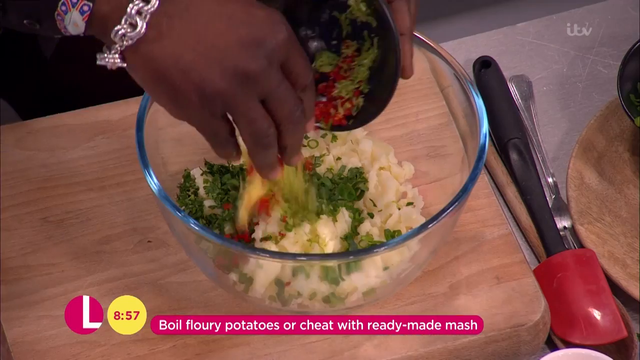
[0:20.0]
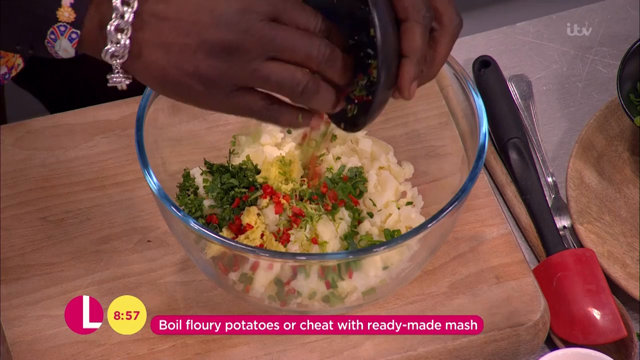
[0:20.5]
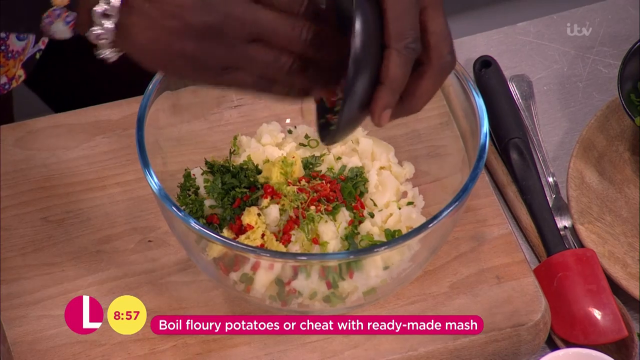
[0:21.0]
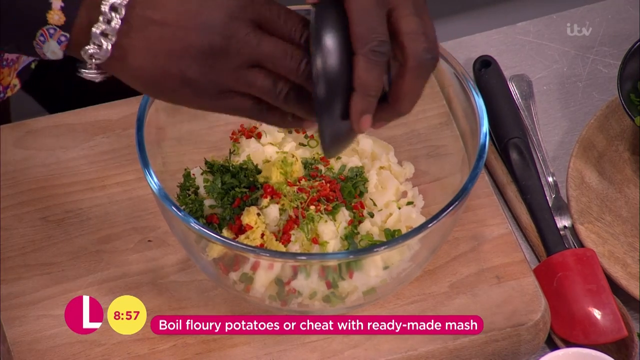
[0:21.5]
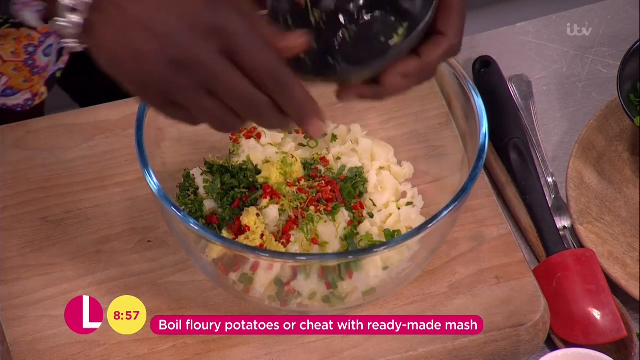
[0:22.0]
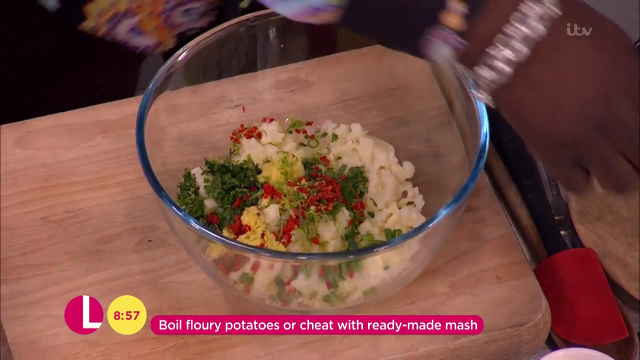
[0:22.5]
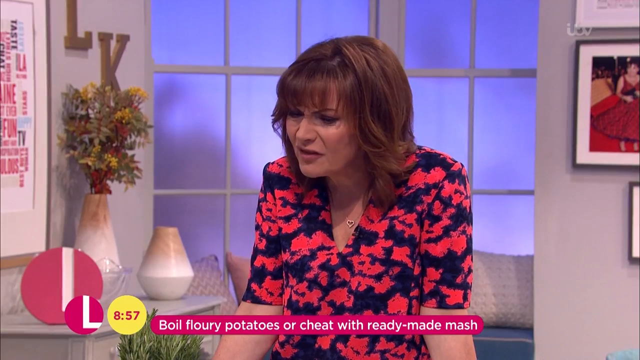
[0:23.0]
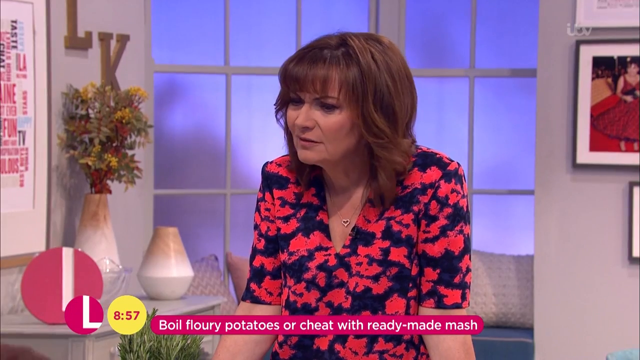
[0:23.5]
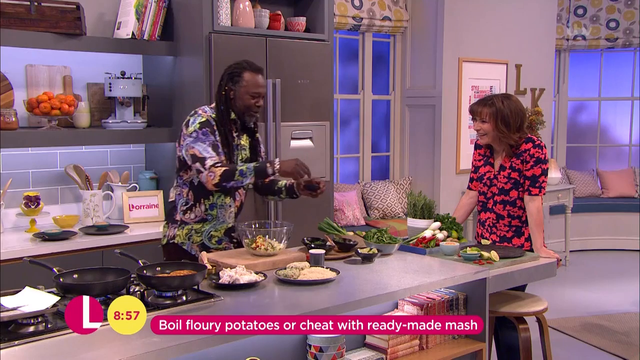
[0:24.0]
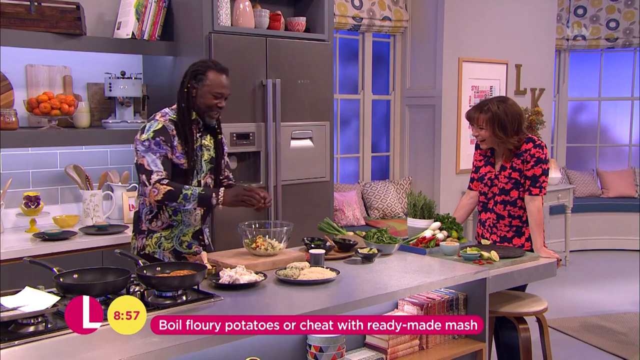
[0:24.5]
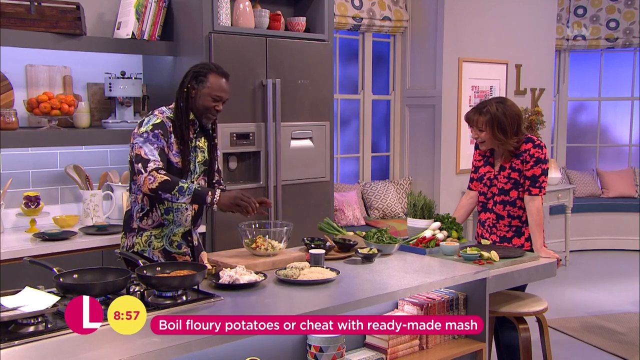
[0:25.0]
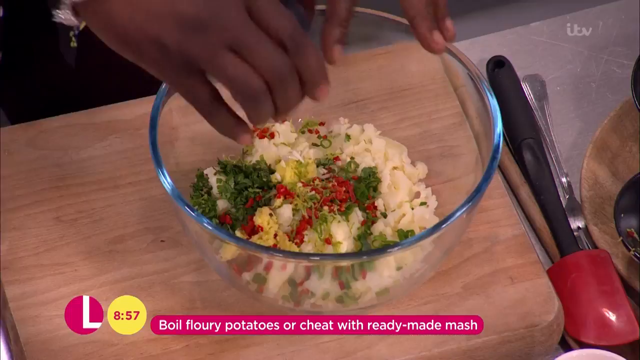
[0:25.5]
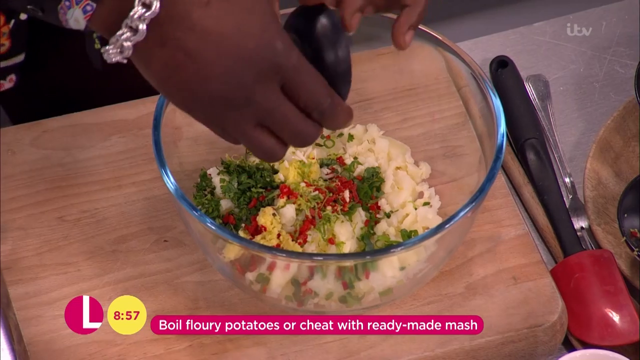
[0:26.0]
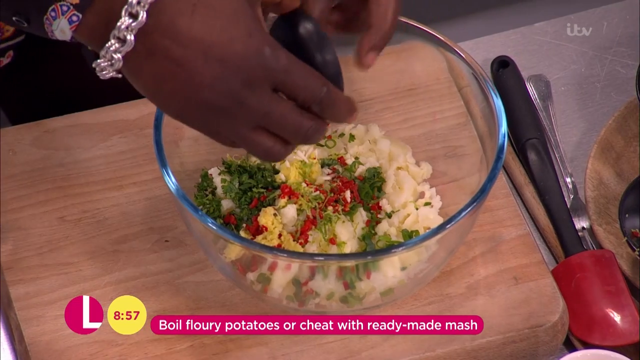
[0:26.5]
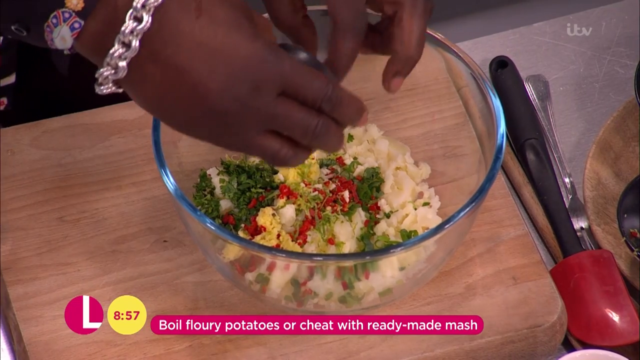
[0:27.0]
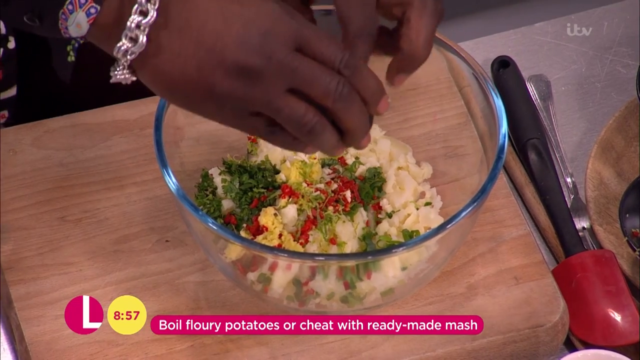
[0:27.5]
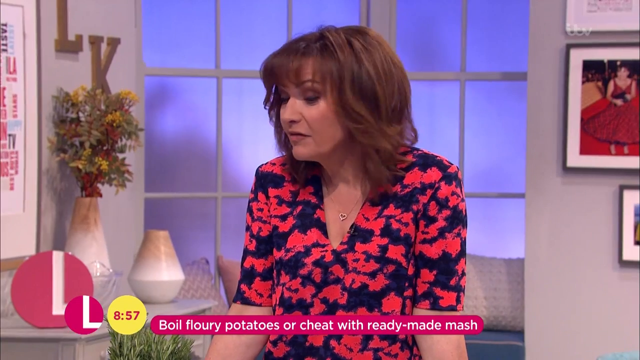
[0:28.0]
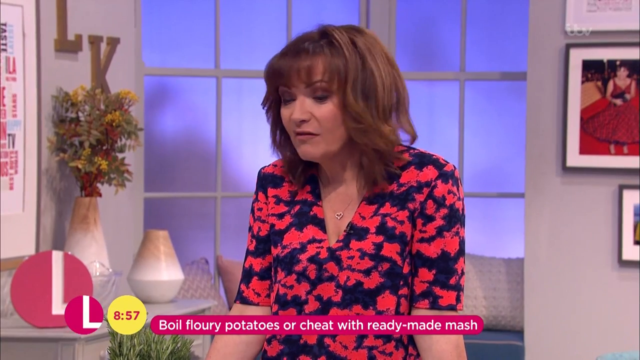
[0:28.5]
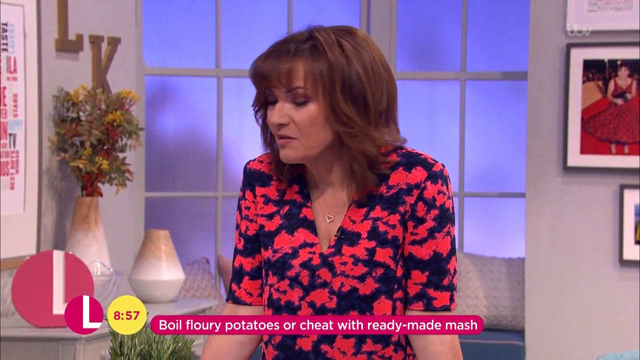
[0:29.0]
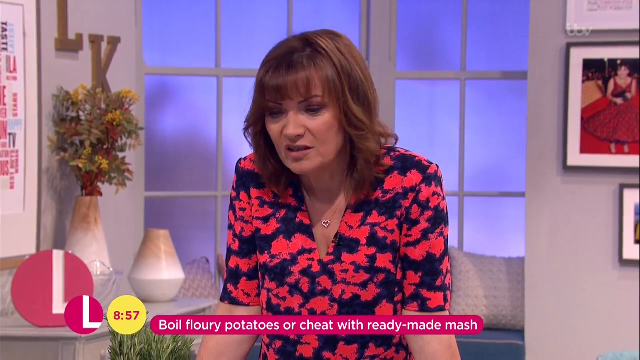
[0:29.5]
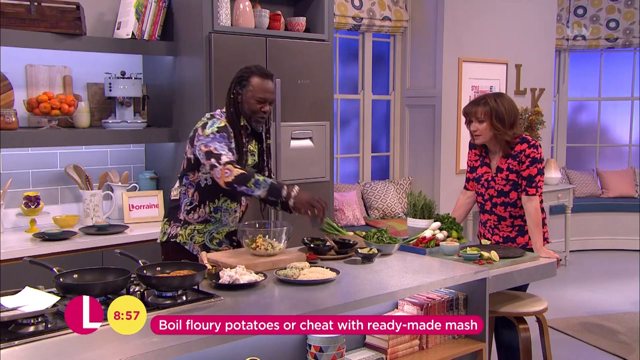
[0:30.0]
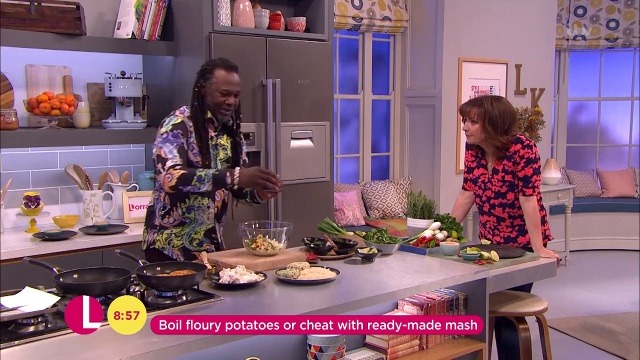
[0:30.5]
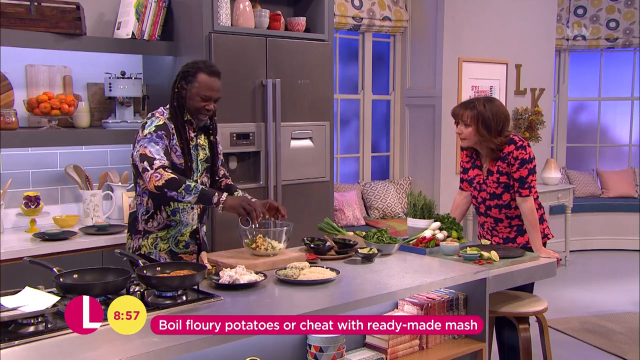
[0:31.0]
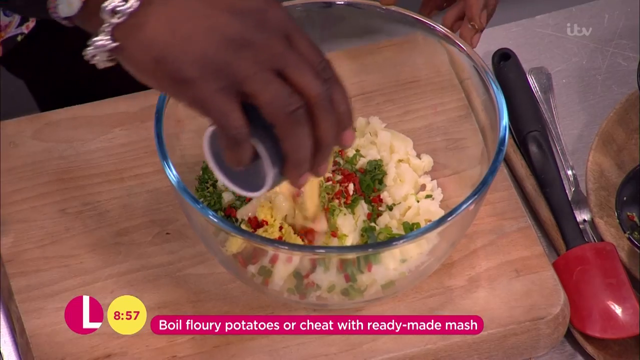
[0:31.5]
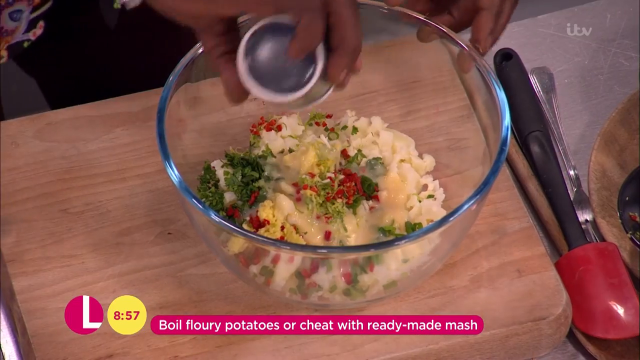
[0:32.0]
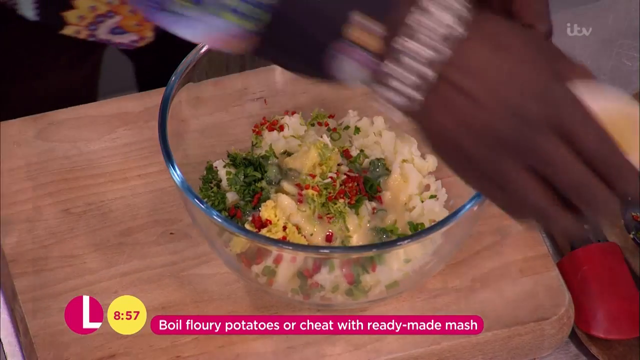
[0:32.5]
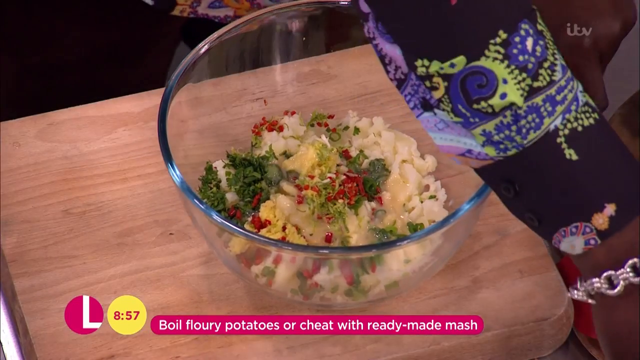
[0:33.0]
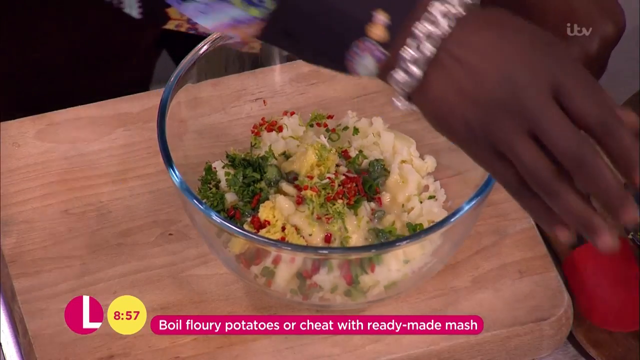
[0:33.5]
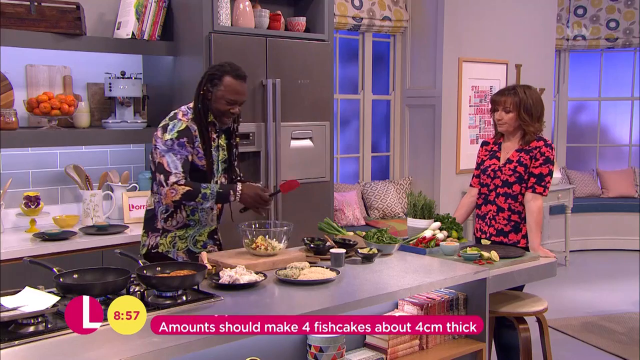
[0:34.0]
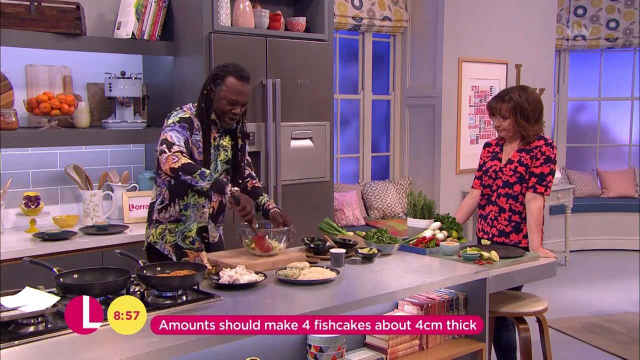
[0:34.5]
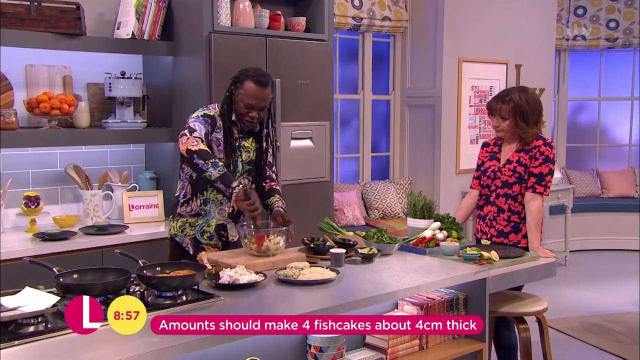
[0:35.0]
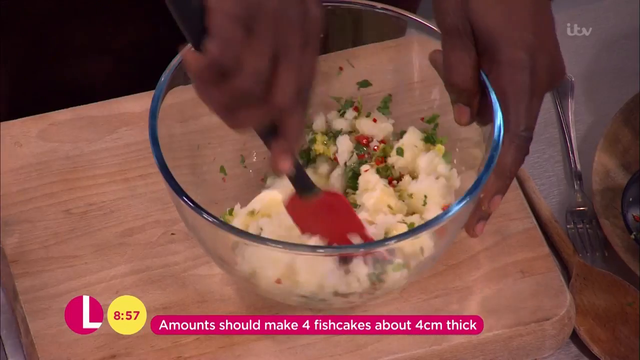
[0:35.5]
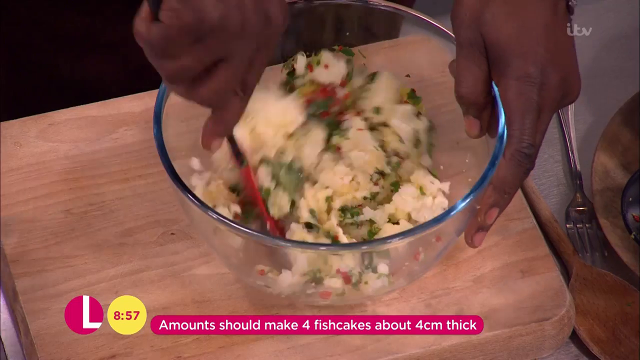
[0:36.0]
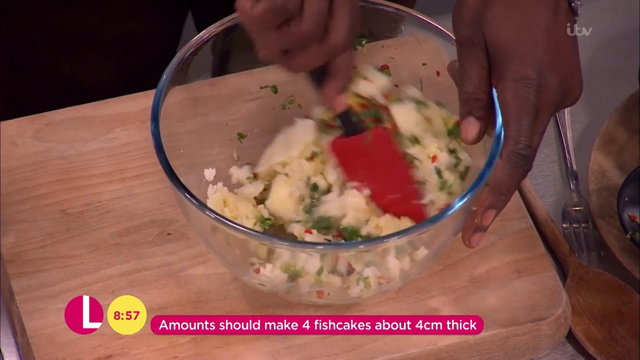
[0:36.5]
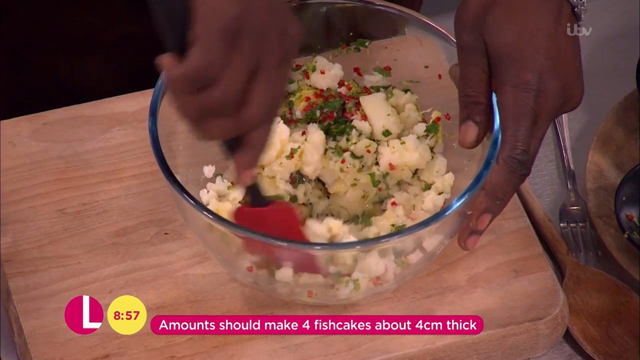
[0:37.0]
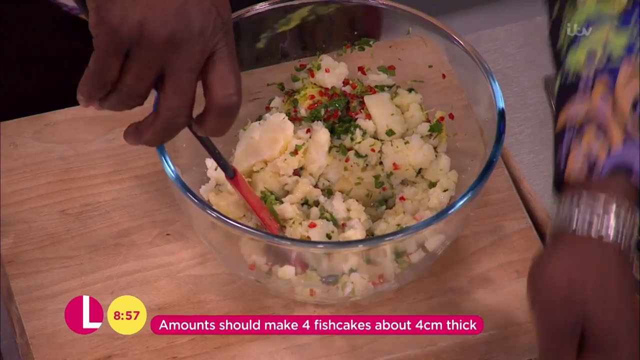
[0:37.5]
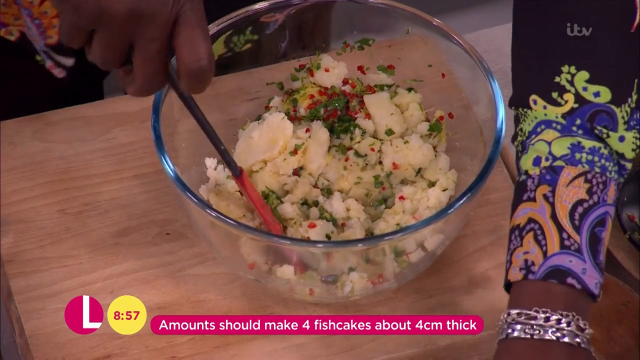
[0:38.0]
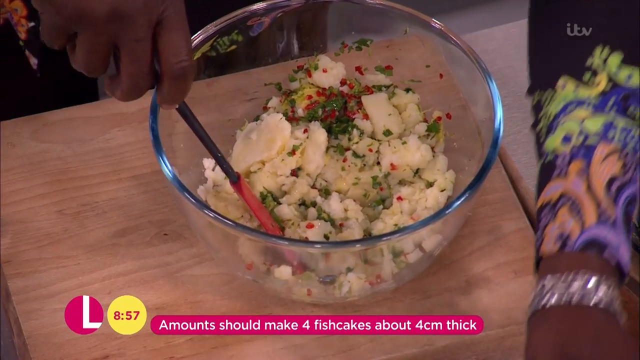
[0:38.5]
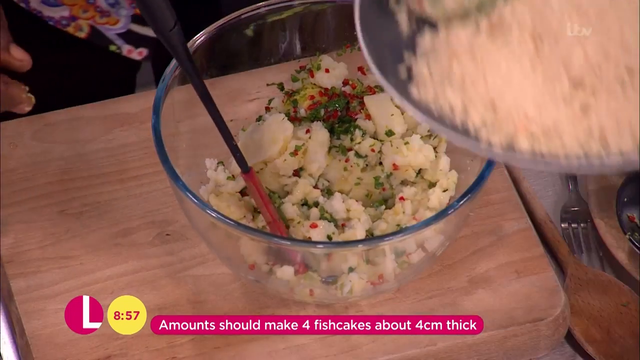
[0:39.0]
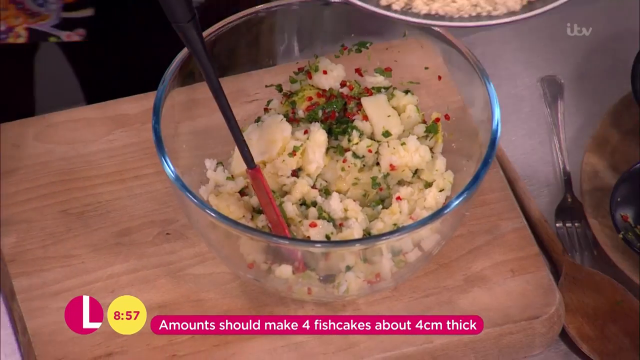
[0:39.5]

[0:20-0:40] In a kitchen set in a television studio, a black man of about 65 is making fish cakes. His co-host, a white woman of about 60, stands at the opposite end of the counter, chatting with the chef and asking him questions. A transparent bowl holds floury boiled potatoes, and various herbs are being added to them. While chatting with the host, the chef adds seasoning and feta cheese to the mixture, then picks up a salad dressing of some sort and pours it in. Using a spatula with a wooden handle and a red flat side, he vigorously mixes the potato mixture and adds garlic and other herbs. He then adds more spices and flavourings, and lastly adds some liquid to bind everything as he mixes, so that it forms a solid structure.